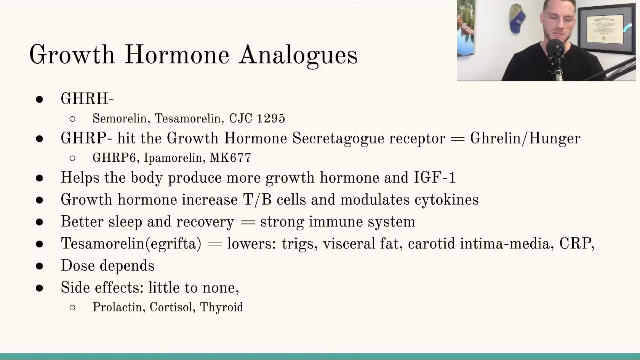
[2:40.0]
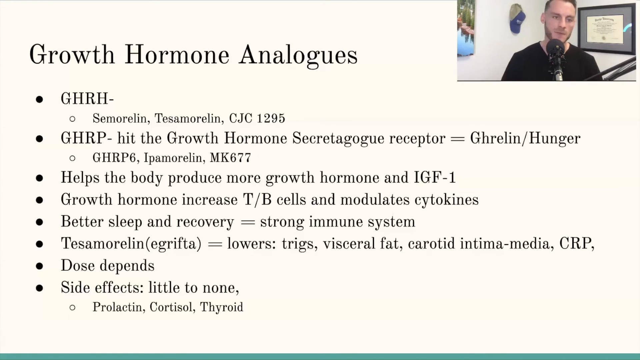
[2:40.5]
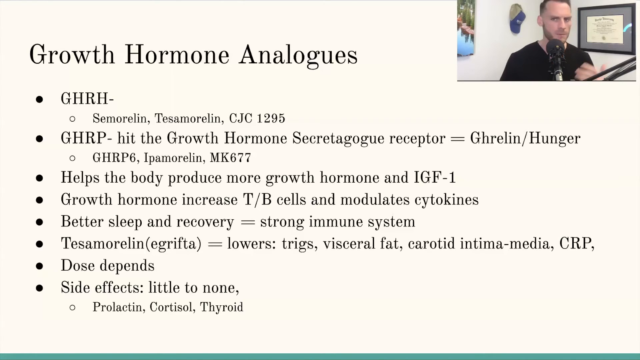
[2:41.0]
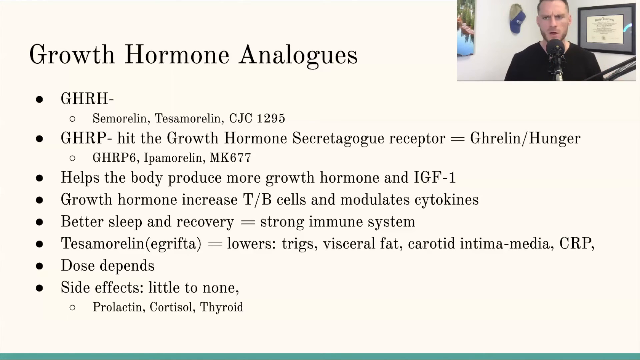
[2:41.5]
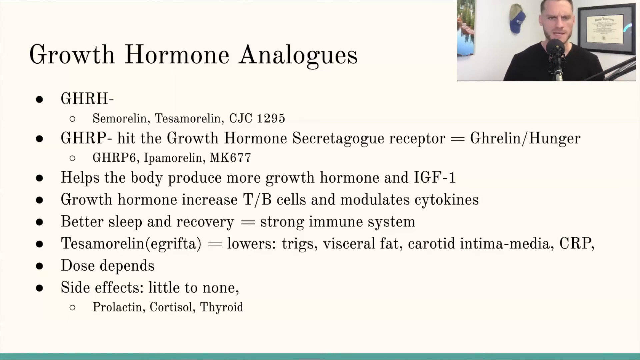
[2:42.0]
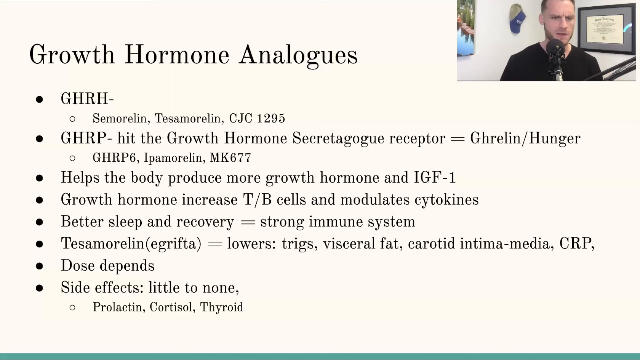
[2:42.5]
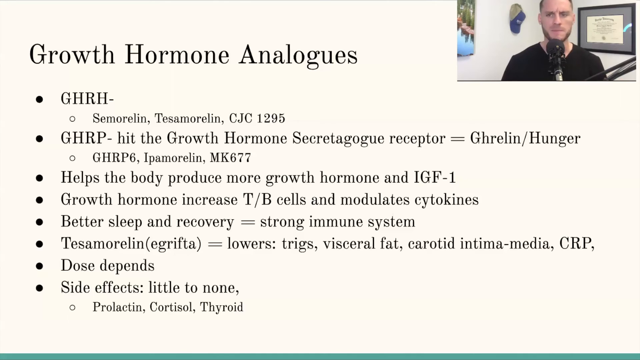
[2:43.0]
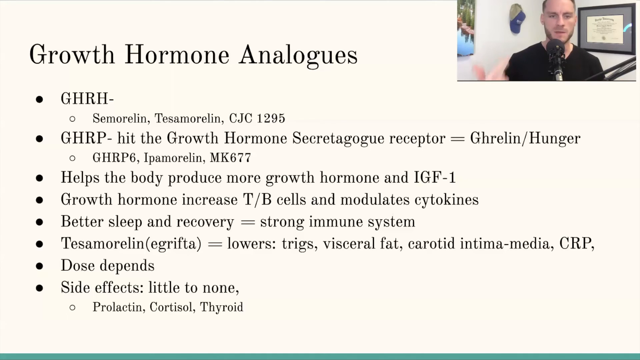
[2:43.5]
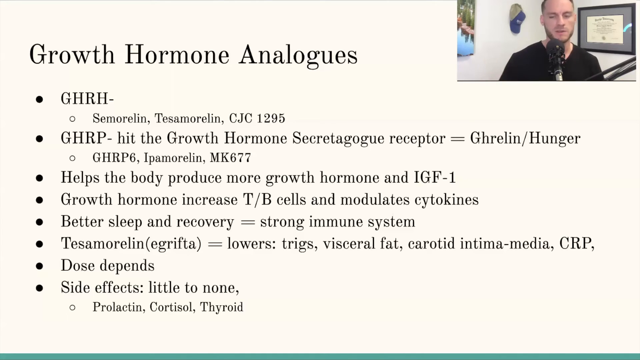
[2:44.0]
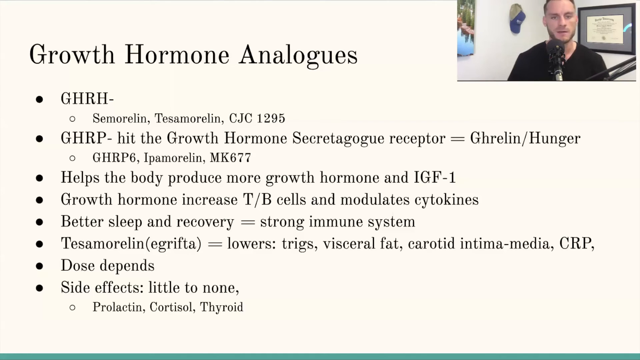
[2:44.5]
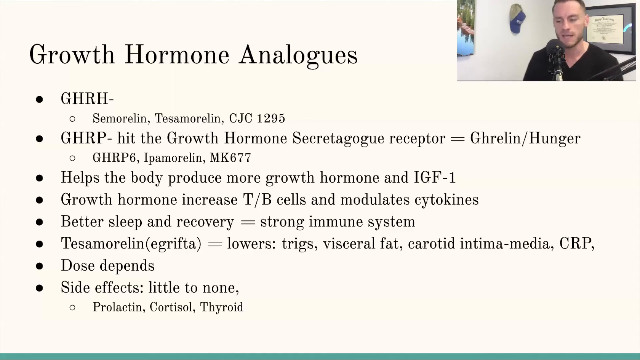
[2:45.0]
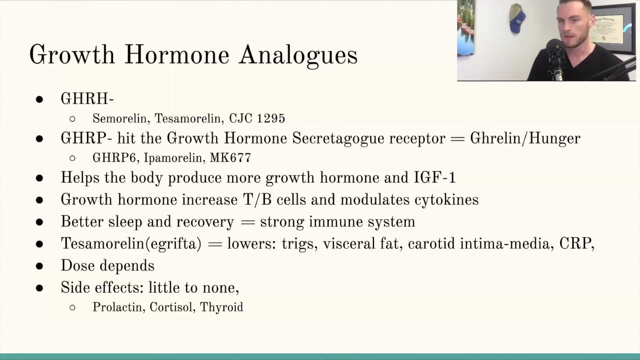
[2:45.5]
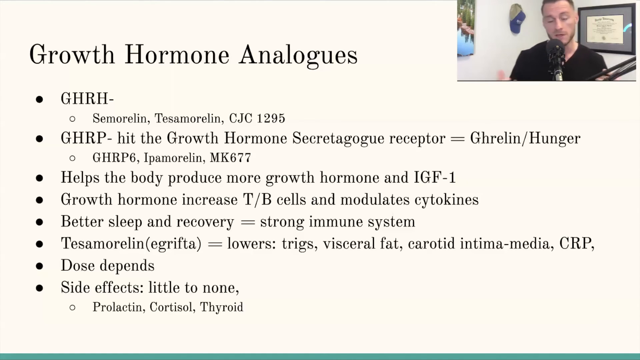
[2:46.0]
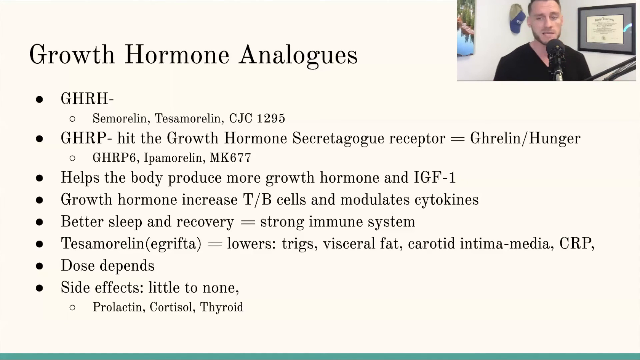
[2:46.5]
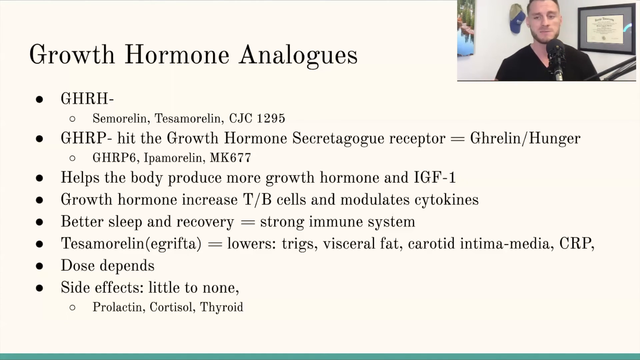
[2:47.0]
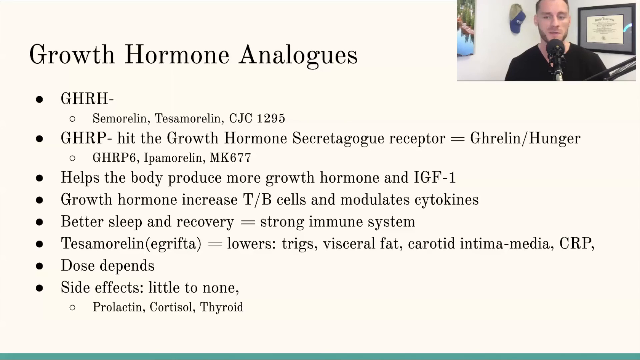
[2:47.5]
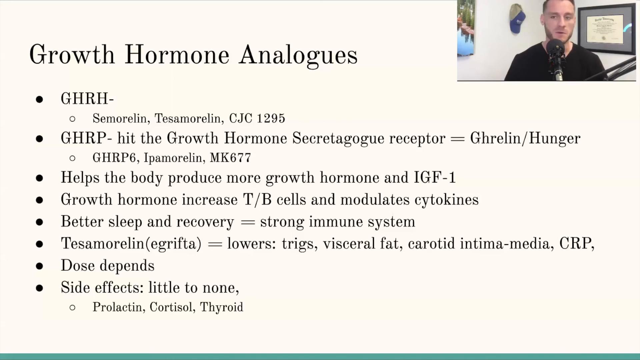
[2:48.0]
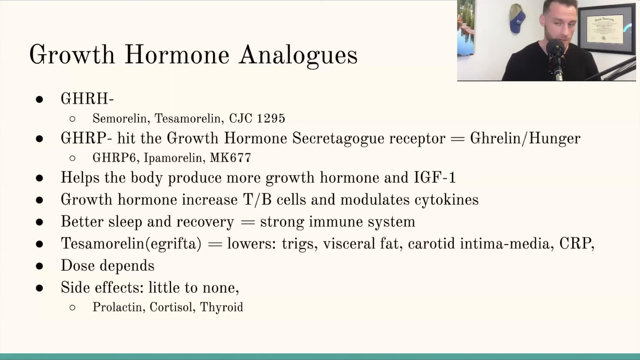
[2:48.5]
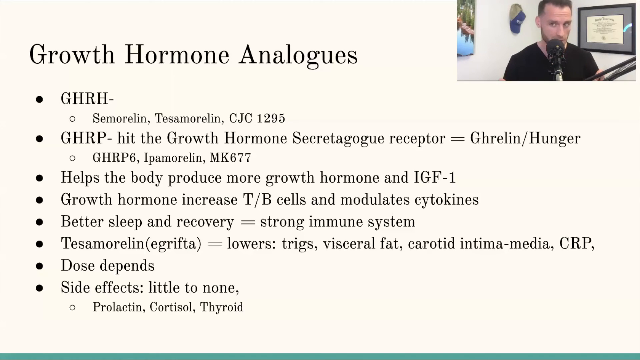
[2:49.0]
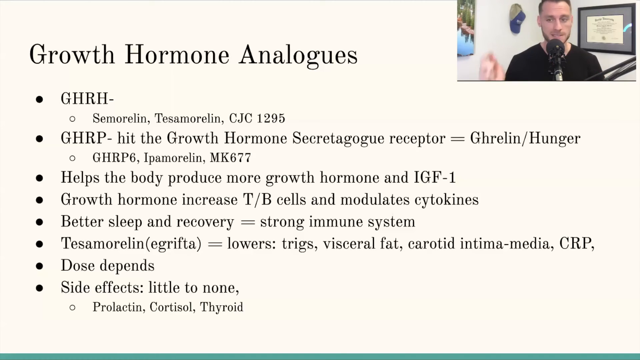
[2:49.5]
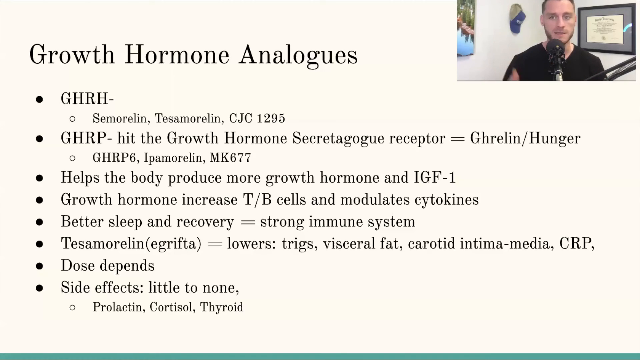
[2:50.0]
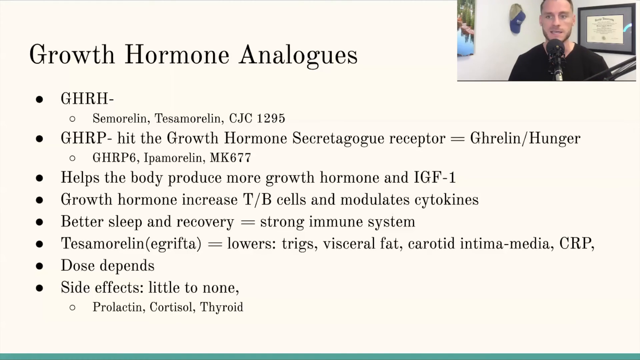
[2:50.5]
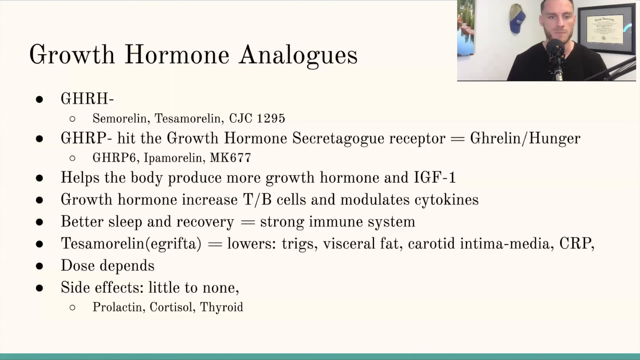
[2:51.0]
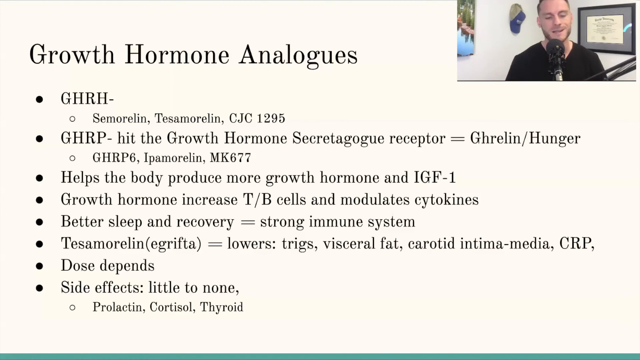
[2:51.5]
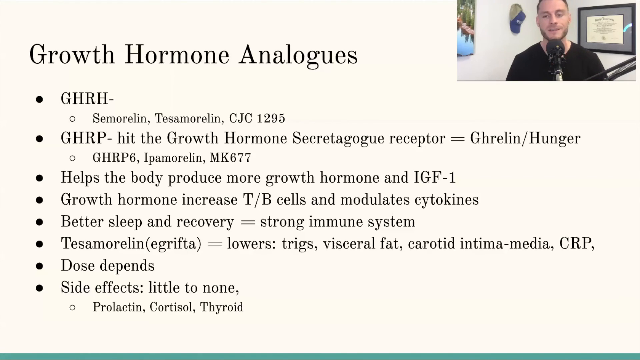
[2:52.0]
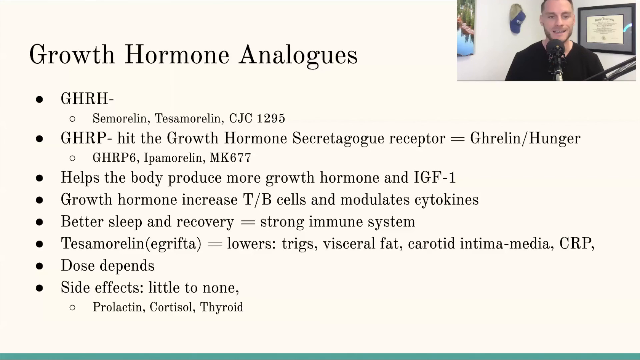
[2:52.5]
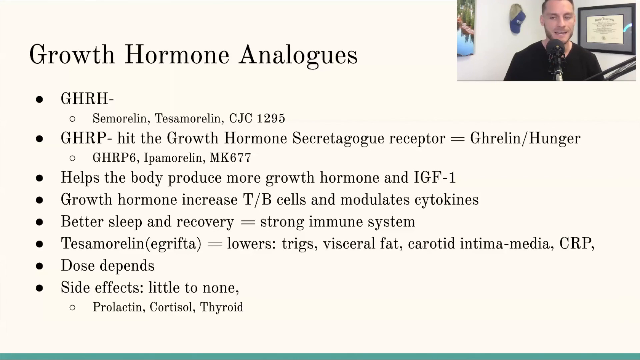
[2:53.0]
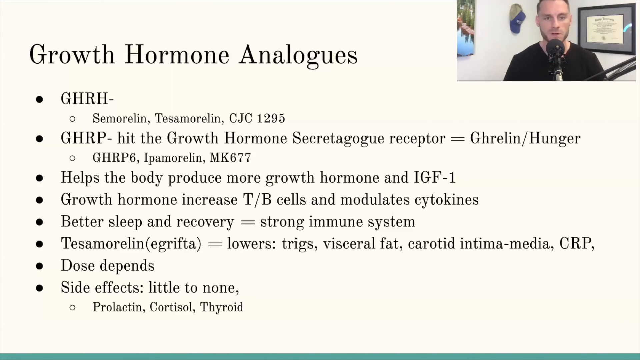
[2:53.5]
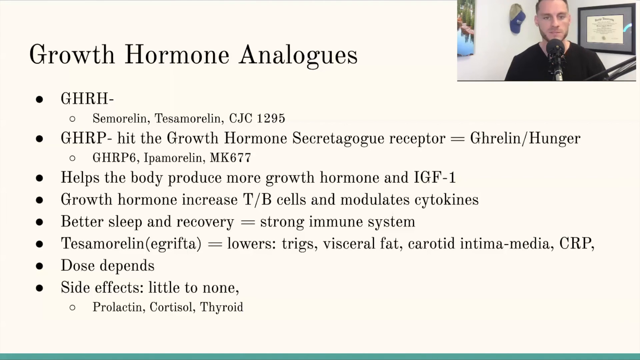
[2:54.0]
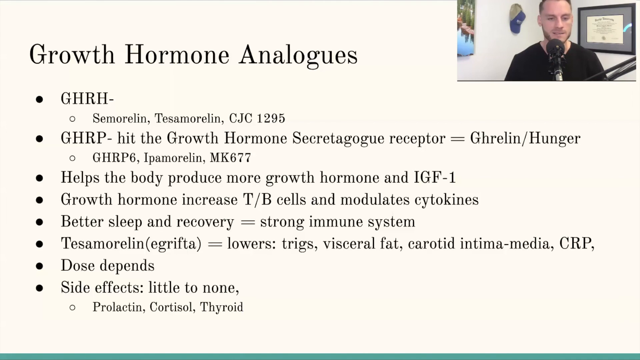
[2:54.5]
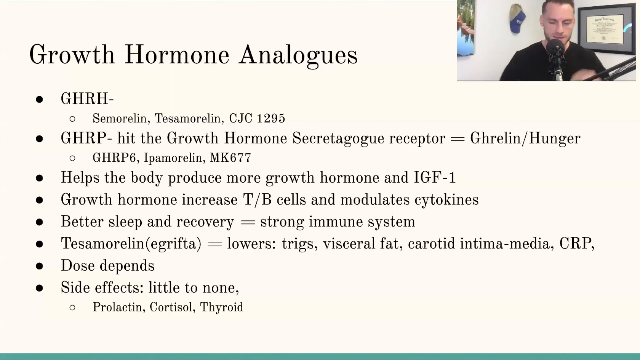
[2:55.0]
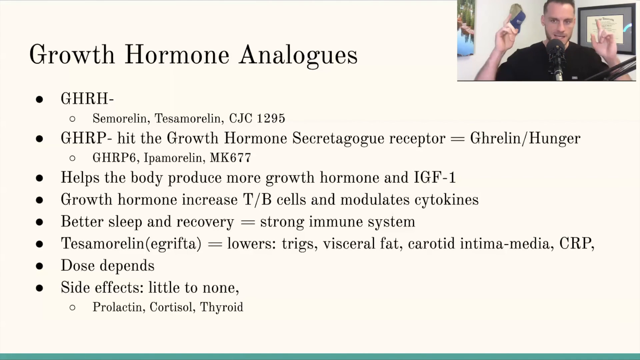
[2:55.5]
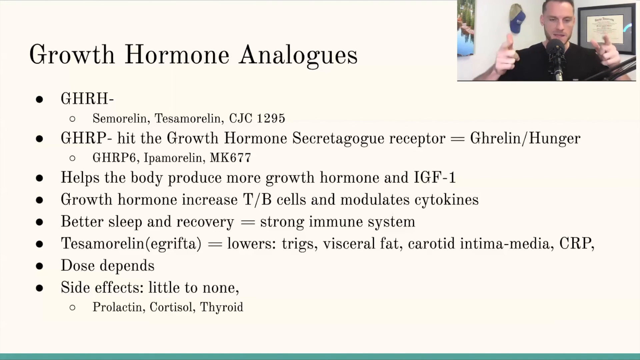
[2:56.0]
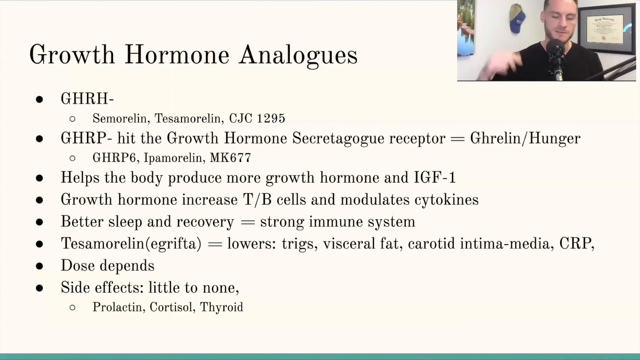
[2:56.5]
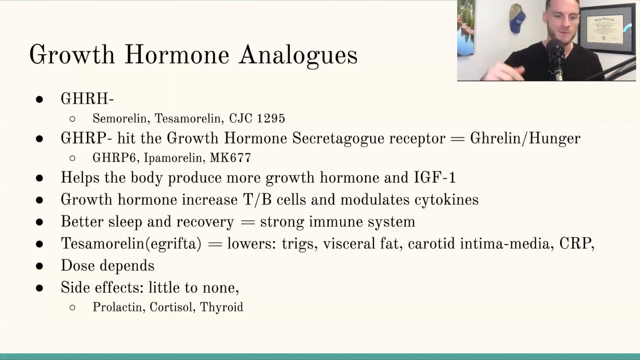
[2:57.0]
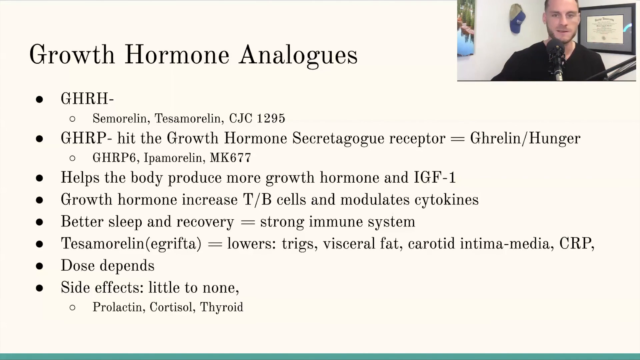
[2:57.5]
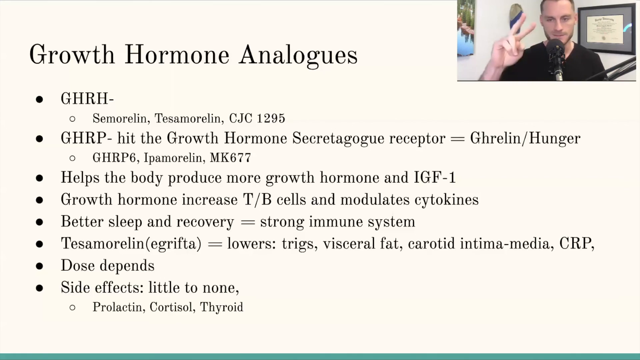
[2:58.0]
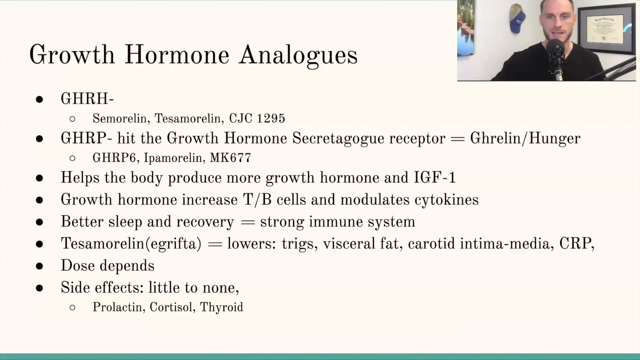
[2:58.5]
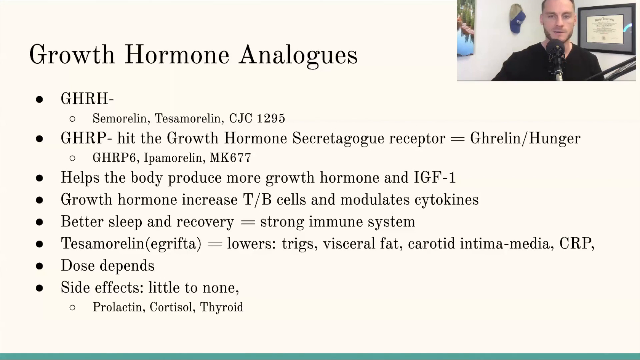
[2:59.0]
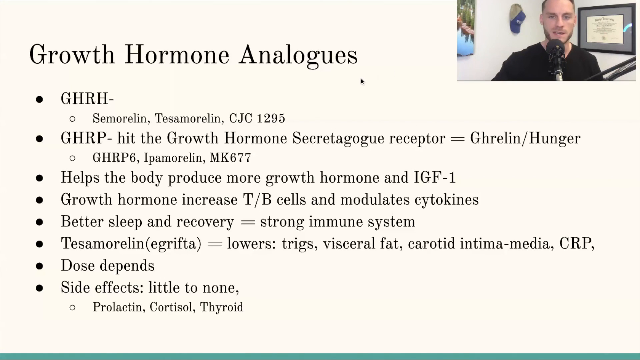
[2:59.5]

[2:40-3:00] The same slide is still on screen. At the start, the man looks like he is counting on his thumb and fingers, listing off points. He points towards the camera, makes a number two with his fingers, and uses many other hand gestures.